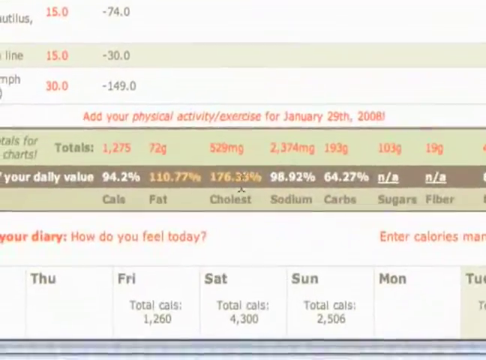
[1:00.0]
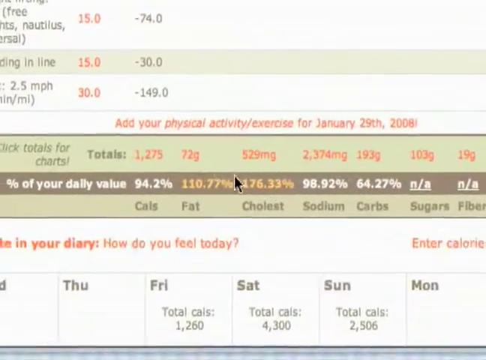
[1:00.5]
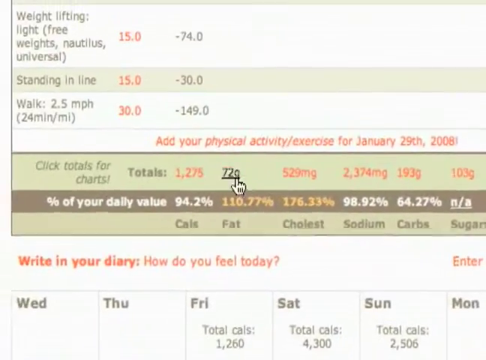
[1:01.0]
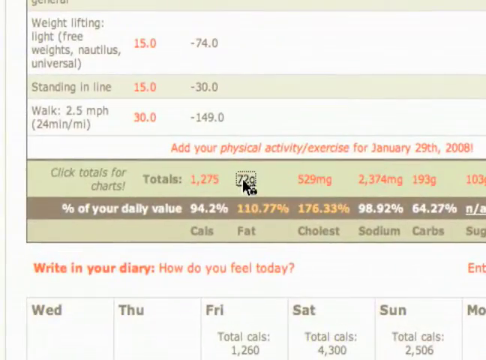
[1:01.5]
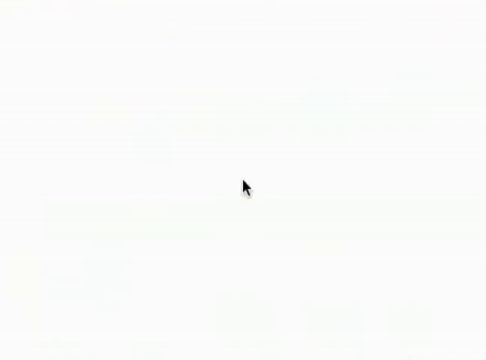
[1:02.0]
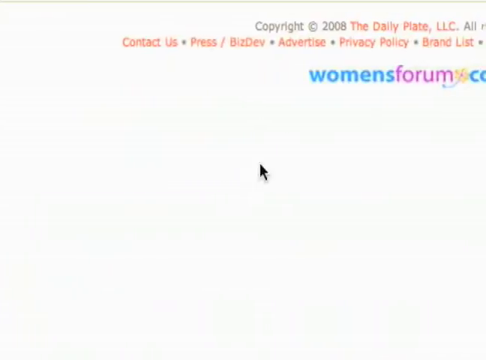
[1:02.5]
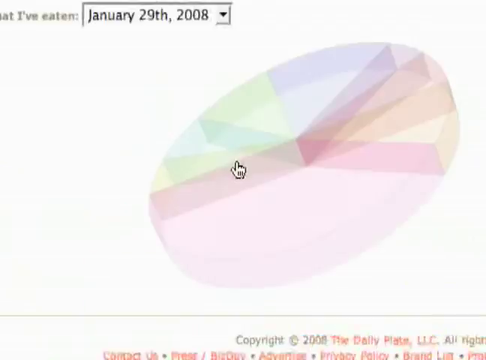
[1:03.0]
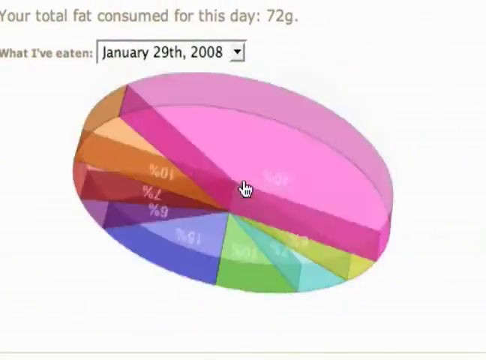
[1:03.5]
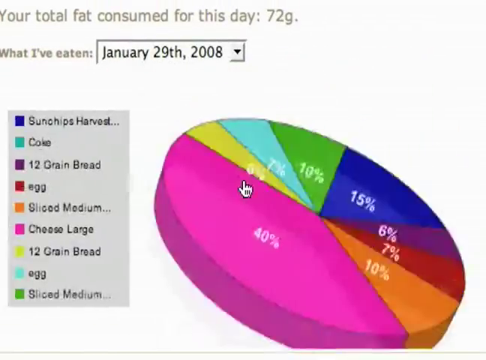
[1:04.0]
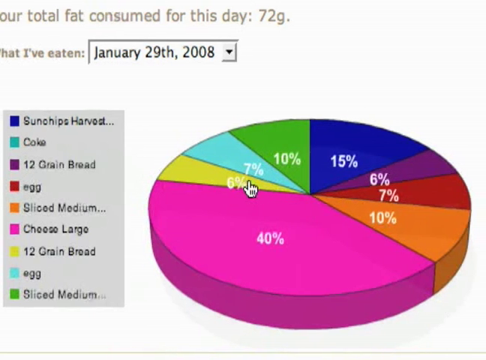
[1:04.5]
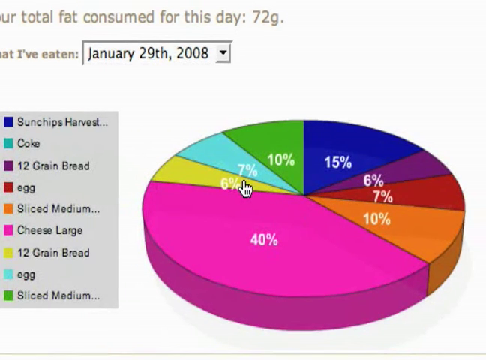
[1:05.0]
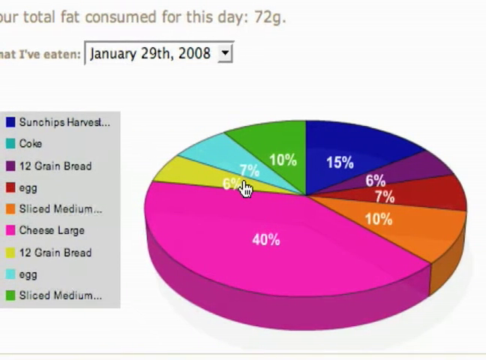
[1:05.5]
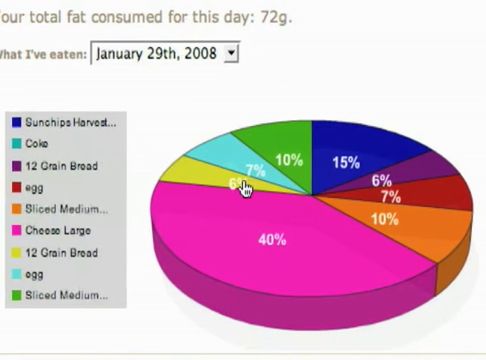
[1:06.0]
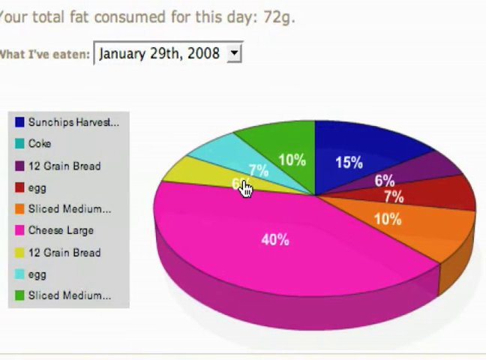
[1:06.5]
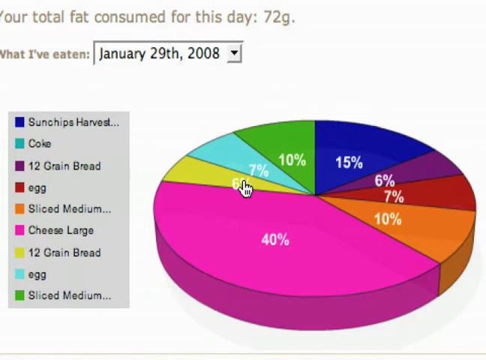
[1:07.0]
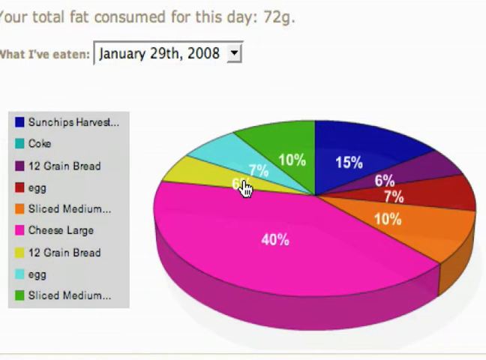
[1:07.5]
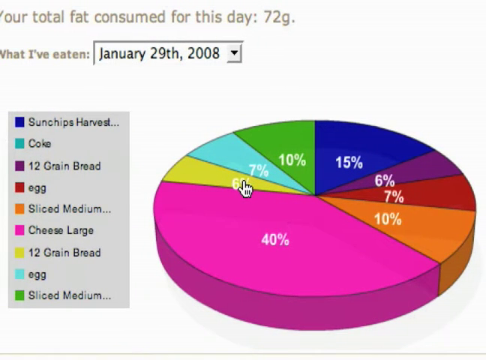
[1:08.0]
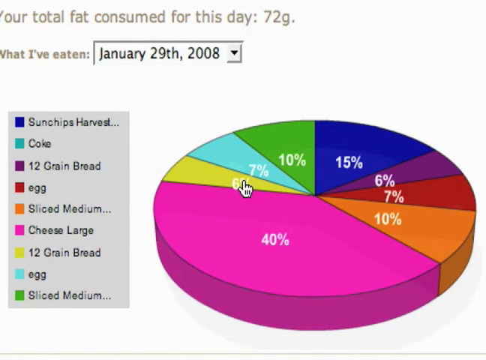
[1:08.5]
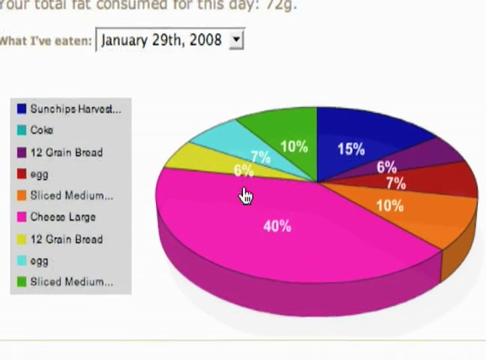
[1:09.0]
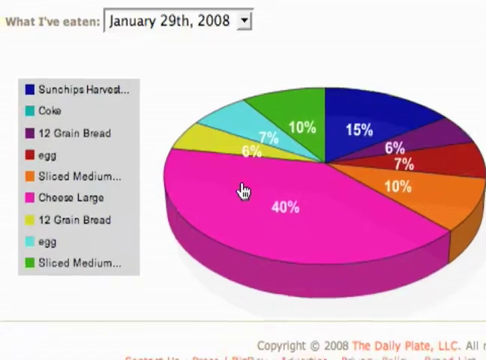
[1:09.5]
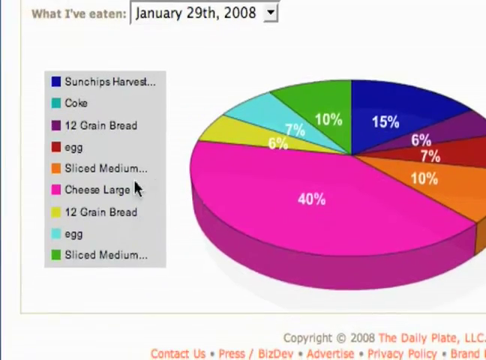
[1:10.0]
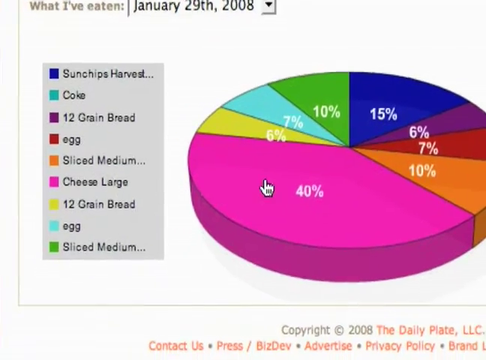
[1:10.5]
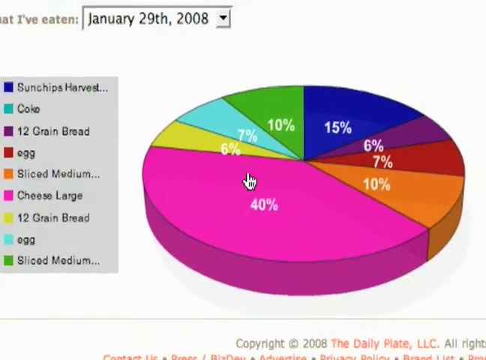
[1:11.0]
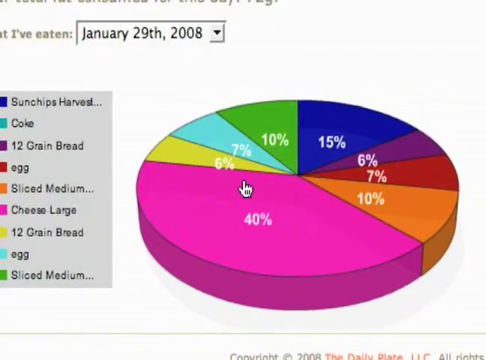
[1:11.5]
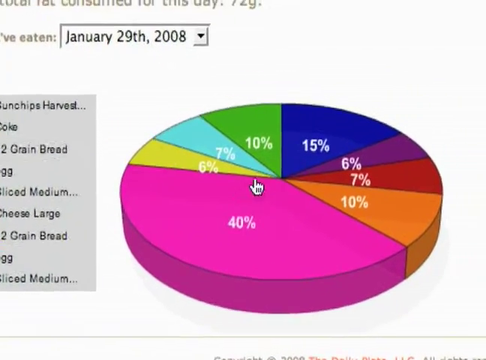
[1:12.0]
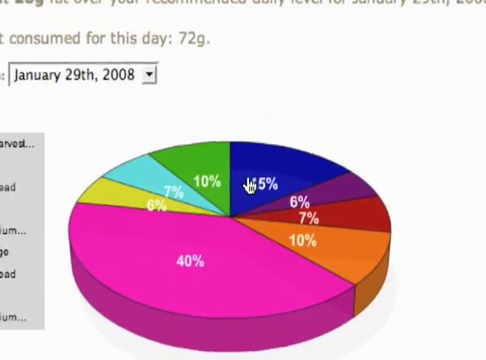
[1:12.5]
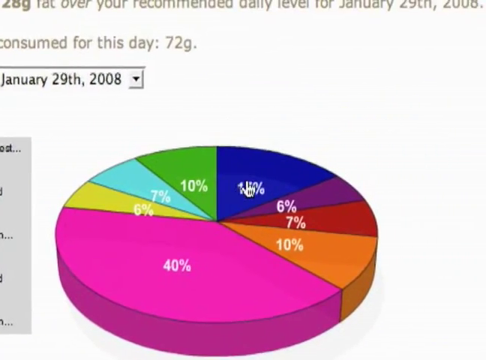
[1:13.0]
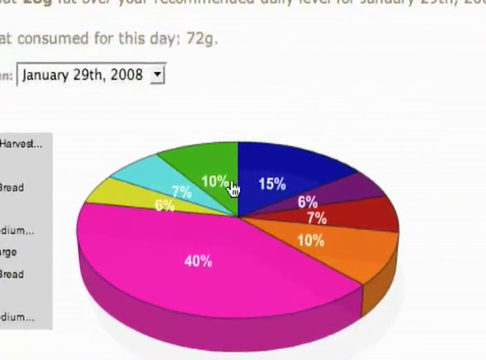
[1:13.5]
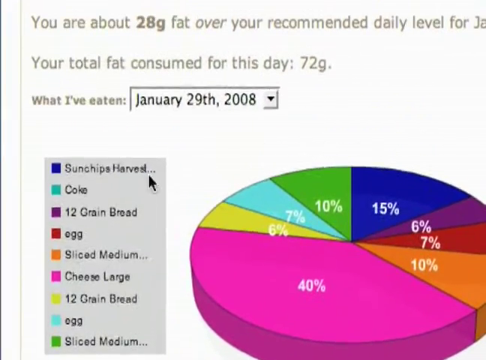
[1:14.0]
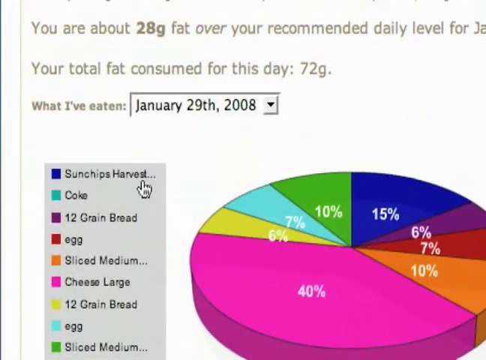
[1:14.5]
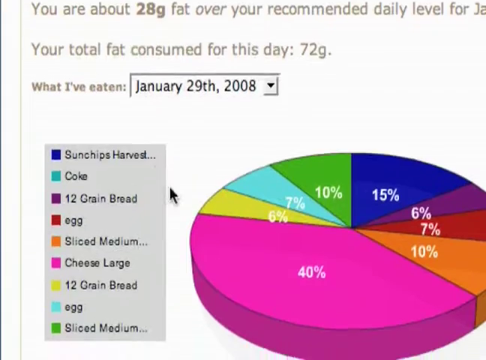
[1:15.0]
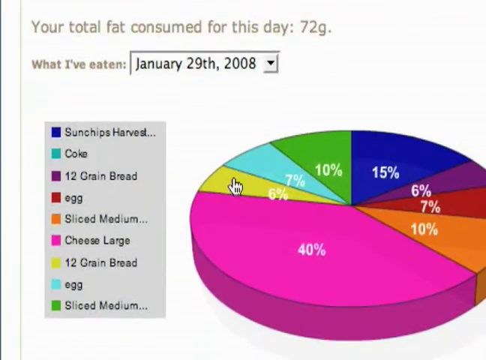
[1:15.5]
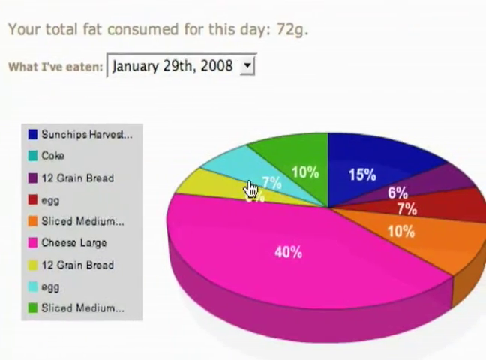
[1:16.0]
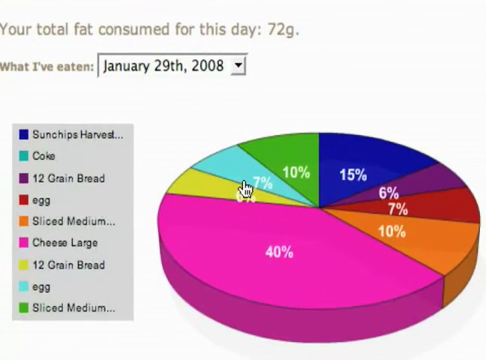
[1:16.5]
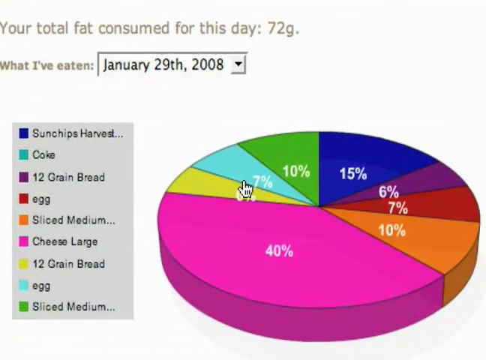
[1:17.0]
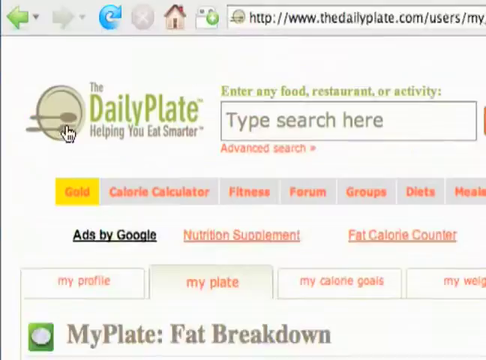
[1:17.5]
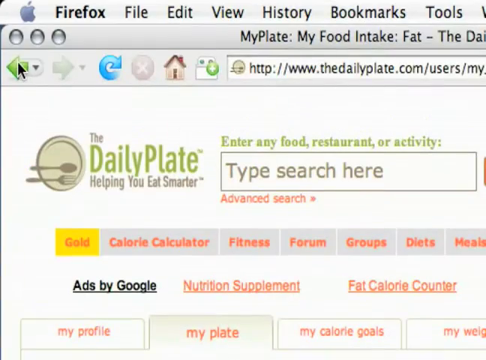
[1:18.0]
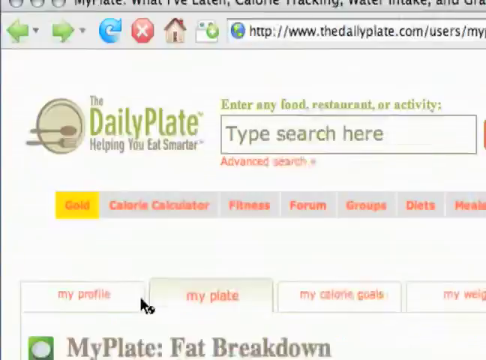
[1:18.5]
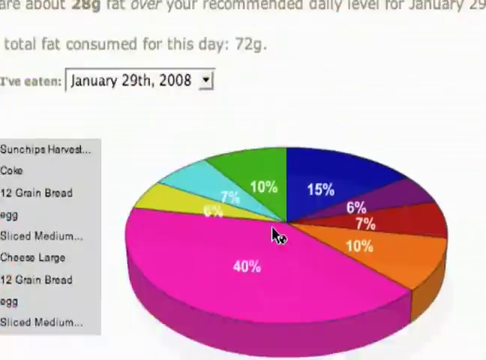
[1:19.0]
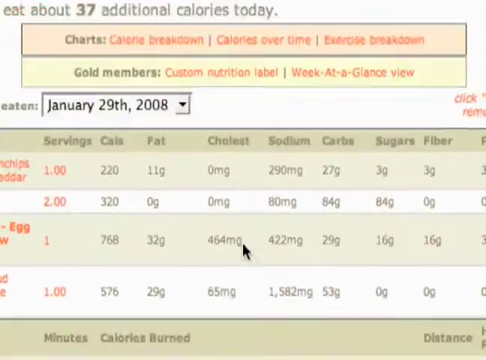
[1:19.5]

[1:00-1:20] The user moves the mouse to a hyperlink for 72 grams and clicks it. A brief little twirly wheel appears as an animated pie chart comes onto the screen, seeming to go through a rotational spin before settling. As it settles, the mouse points at 6%, which relates to 12 grain bread. The user moves the mouse a little from side to side, down to the 6% 12 grain bread section, then down to 40%, "cheese large," then to 15%, "chips harvest," and then to 7%, an egg. The user then moves the cursor to the very top of the screen and clicks the browser's Back button, returning to the main calorie screen.